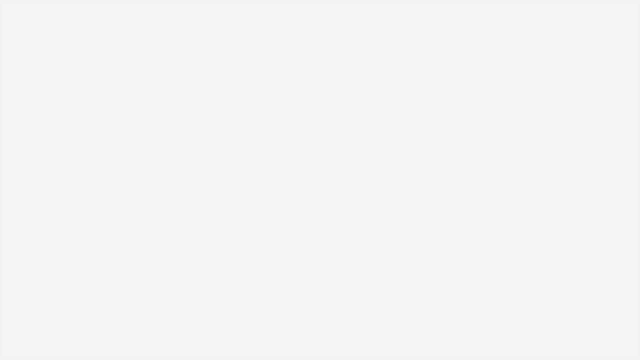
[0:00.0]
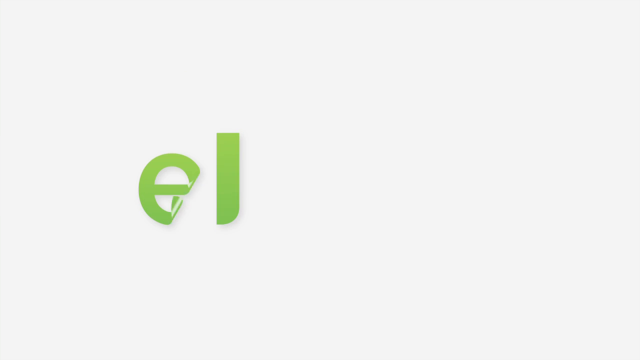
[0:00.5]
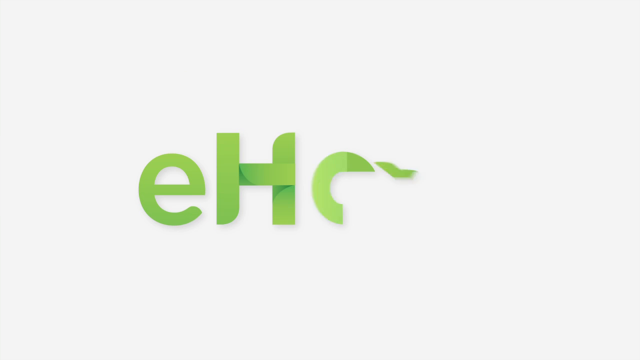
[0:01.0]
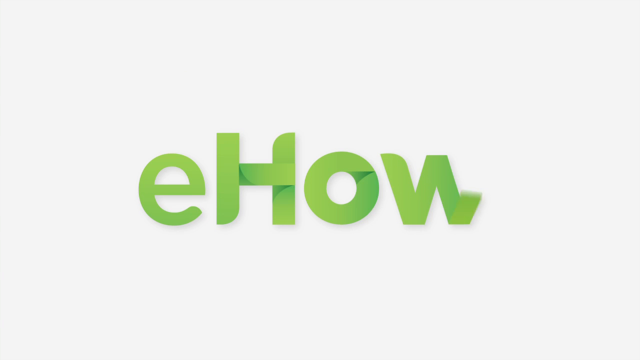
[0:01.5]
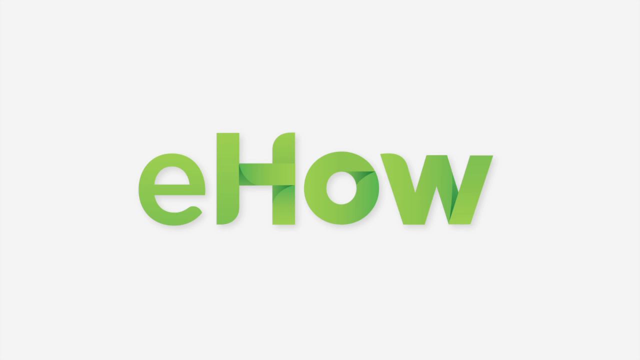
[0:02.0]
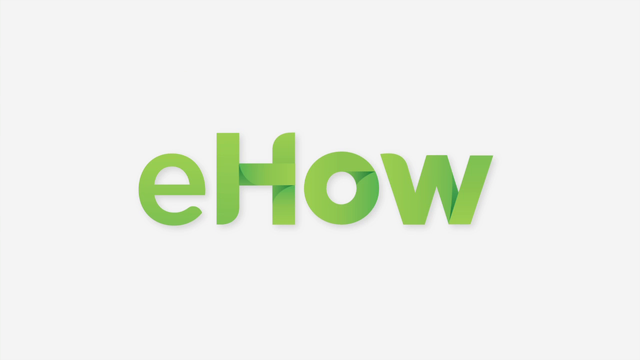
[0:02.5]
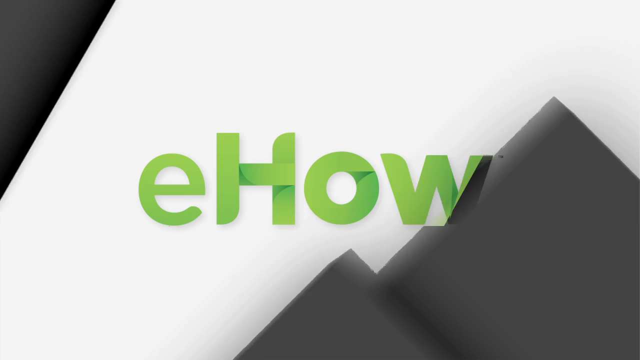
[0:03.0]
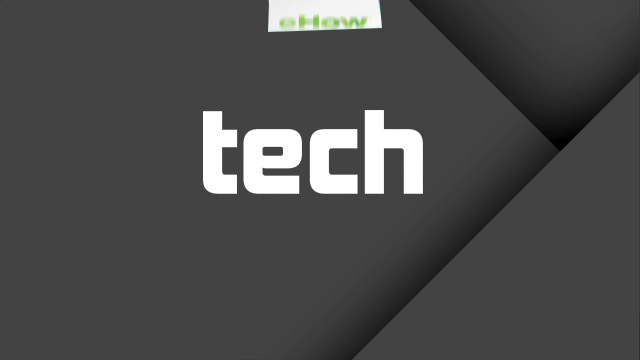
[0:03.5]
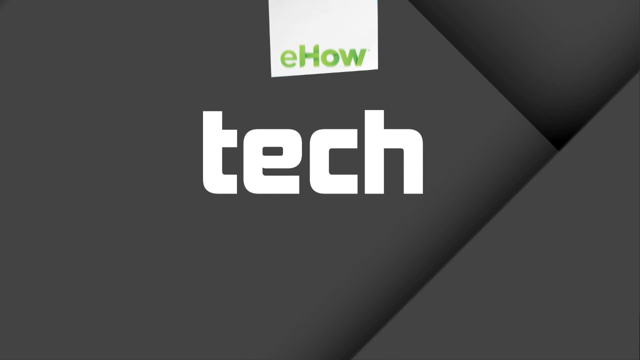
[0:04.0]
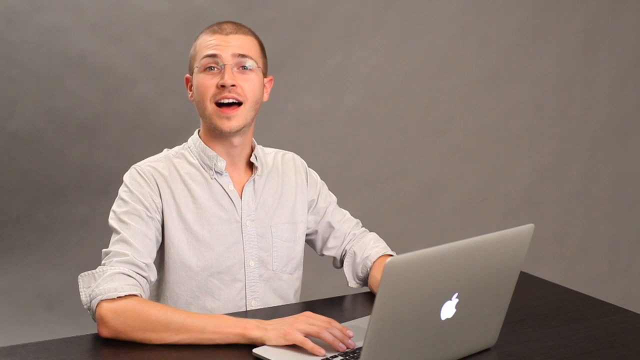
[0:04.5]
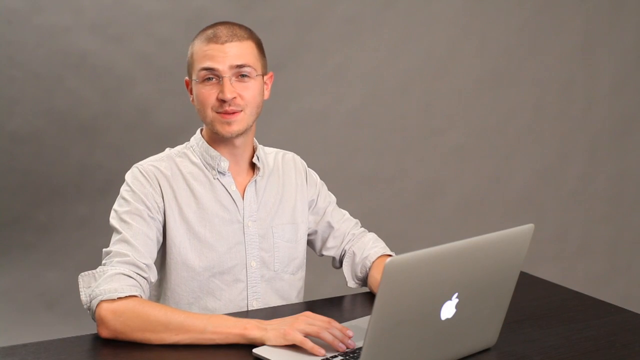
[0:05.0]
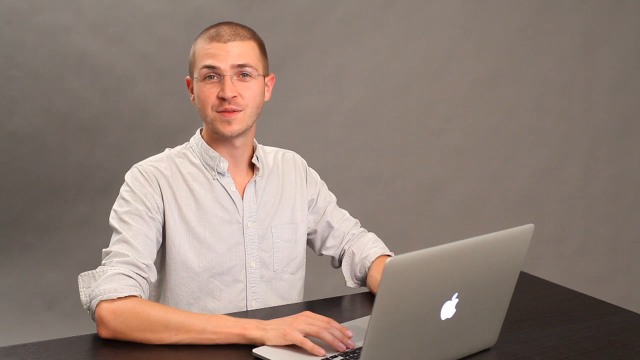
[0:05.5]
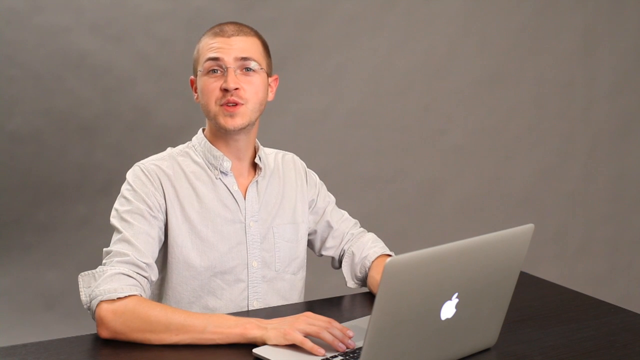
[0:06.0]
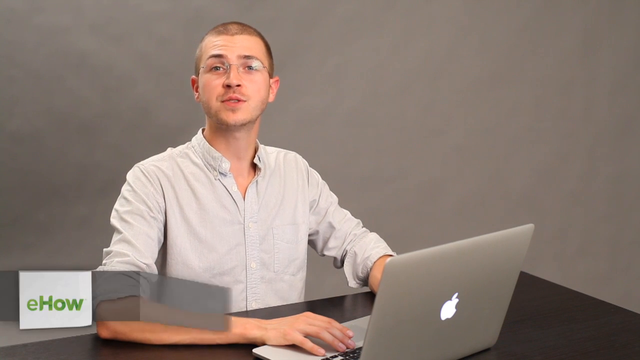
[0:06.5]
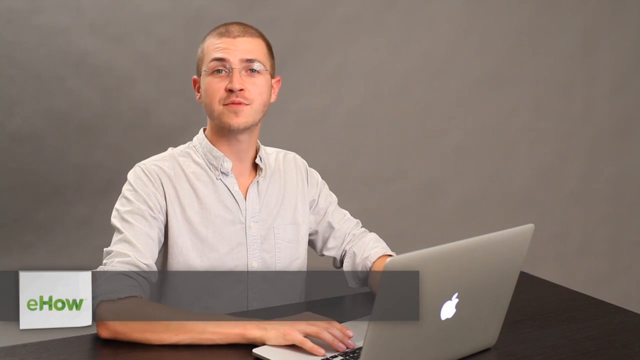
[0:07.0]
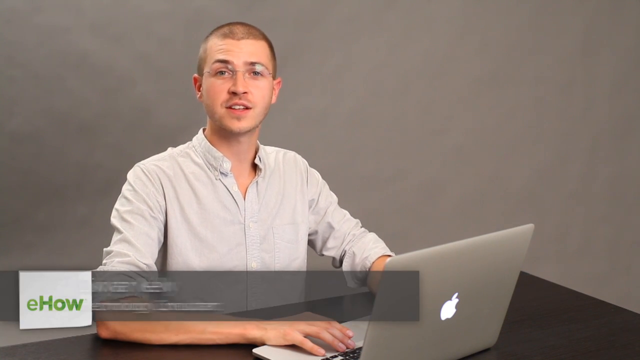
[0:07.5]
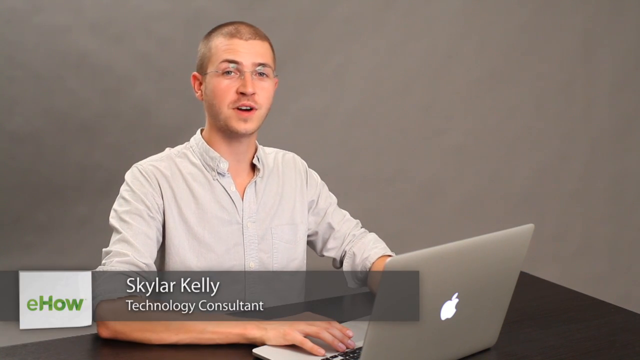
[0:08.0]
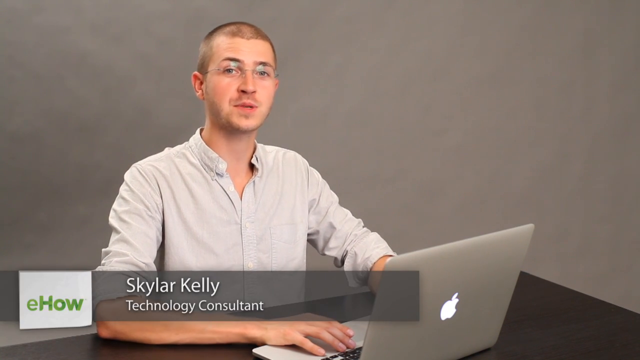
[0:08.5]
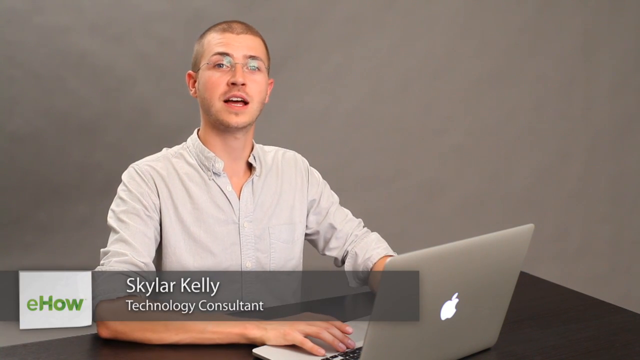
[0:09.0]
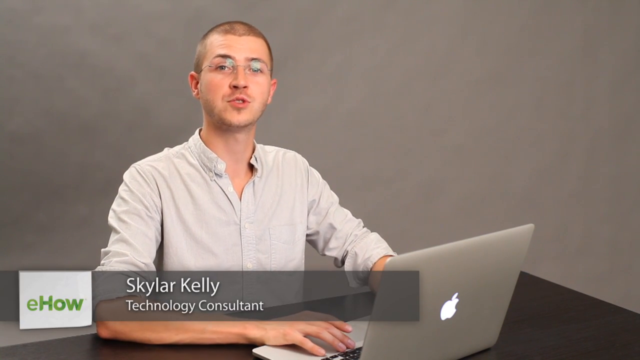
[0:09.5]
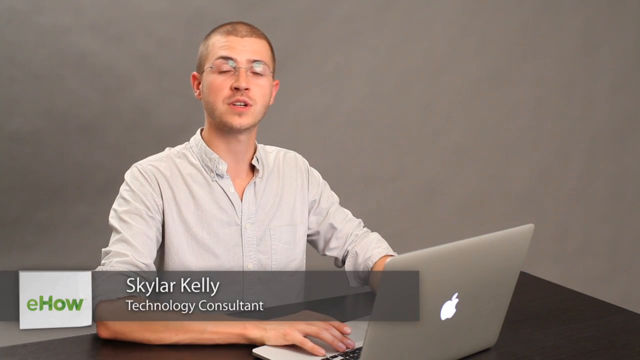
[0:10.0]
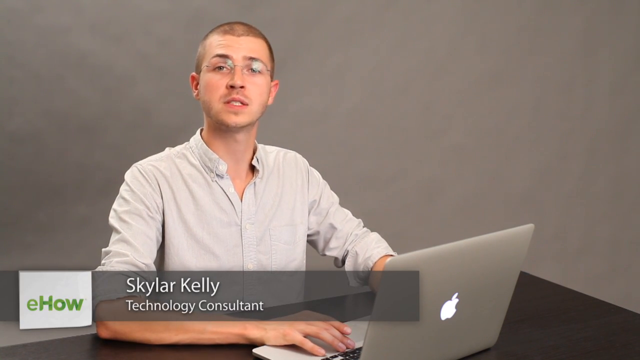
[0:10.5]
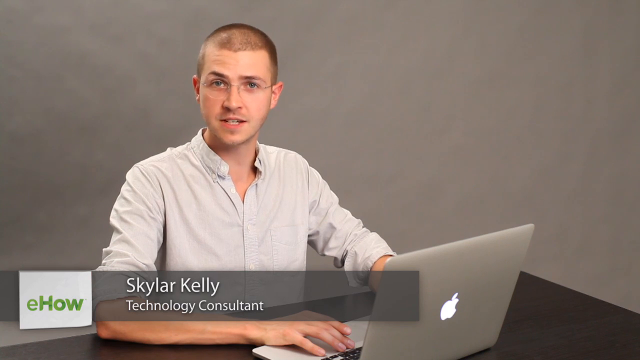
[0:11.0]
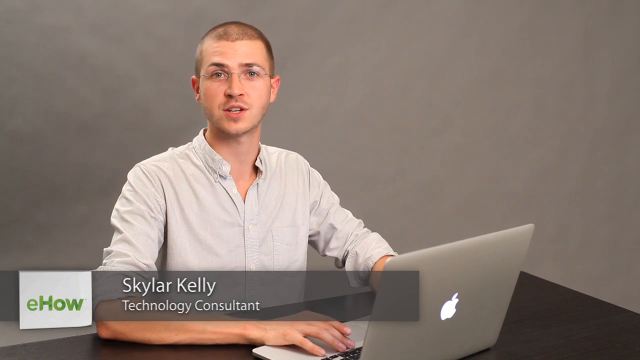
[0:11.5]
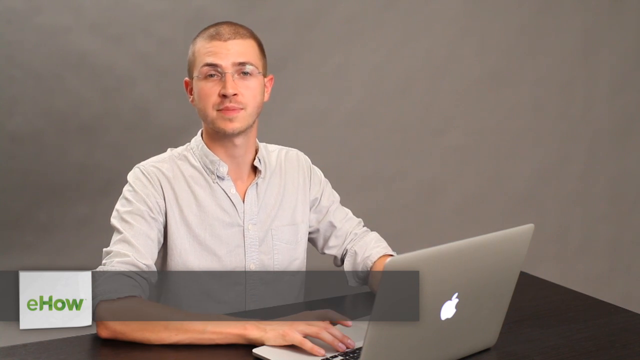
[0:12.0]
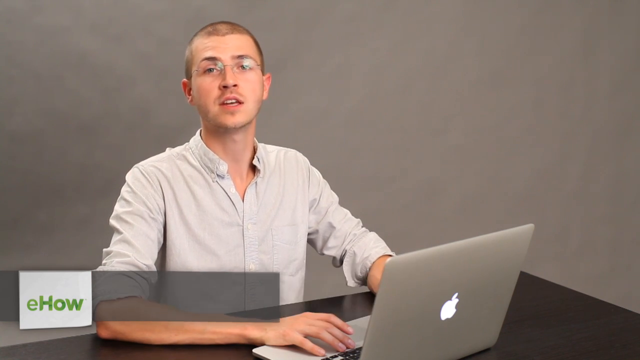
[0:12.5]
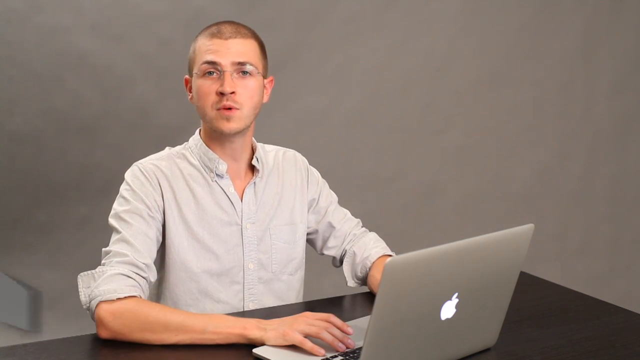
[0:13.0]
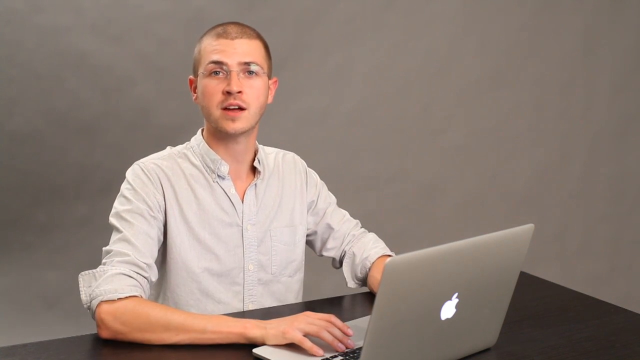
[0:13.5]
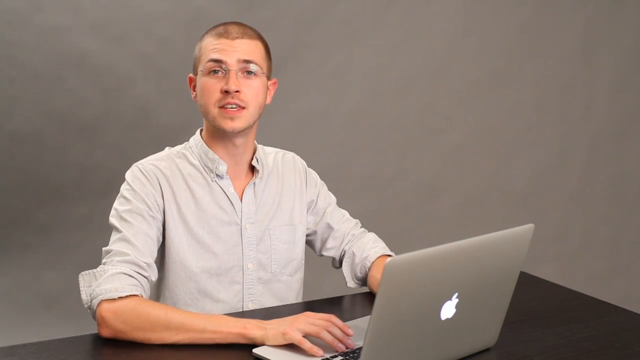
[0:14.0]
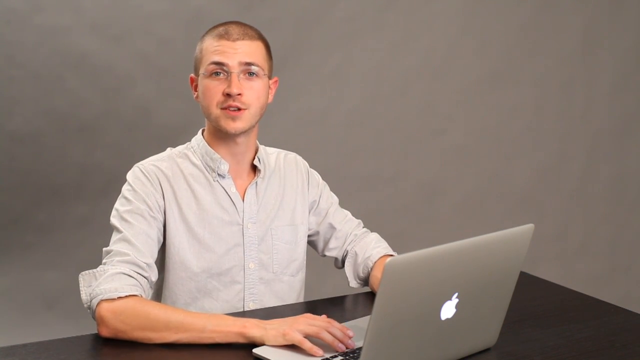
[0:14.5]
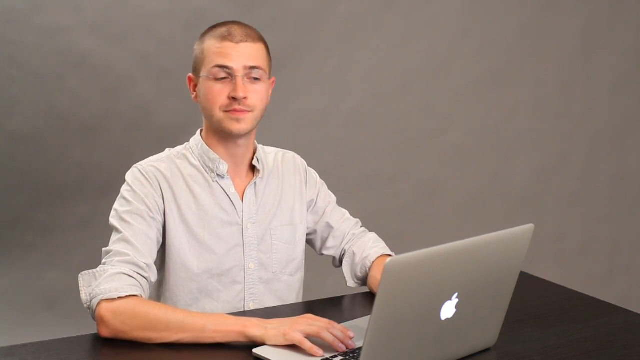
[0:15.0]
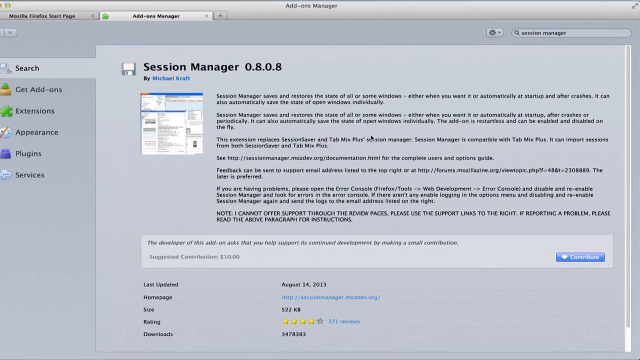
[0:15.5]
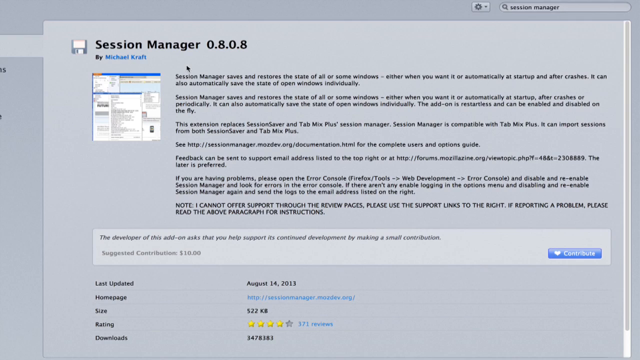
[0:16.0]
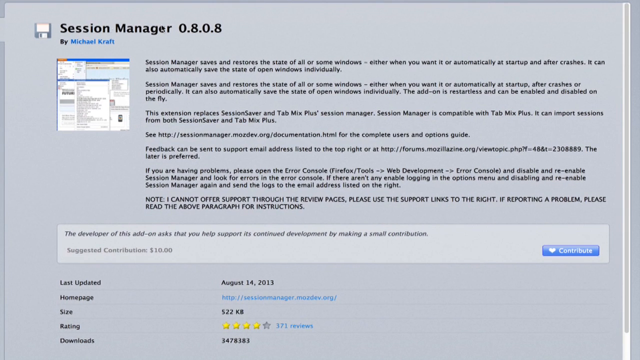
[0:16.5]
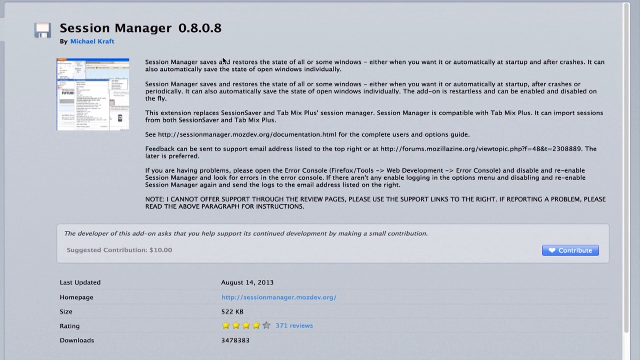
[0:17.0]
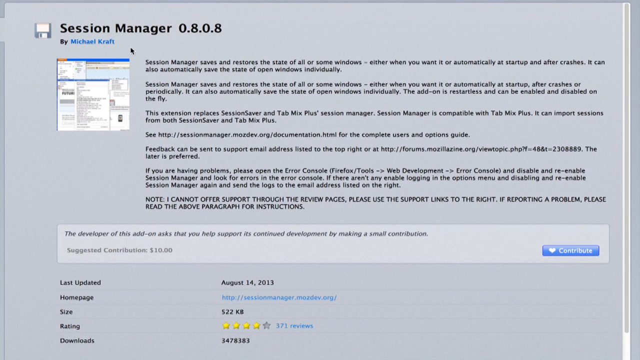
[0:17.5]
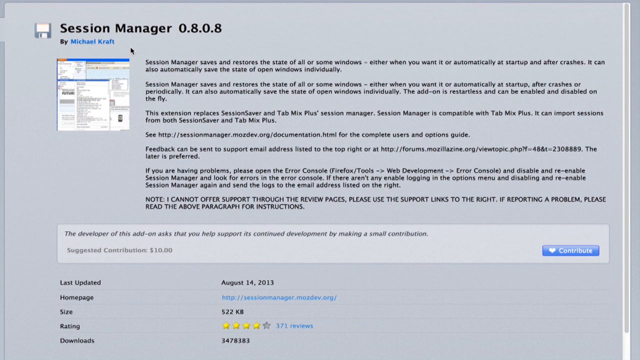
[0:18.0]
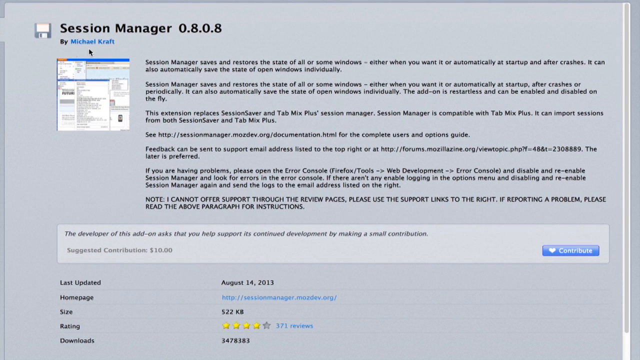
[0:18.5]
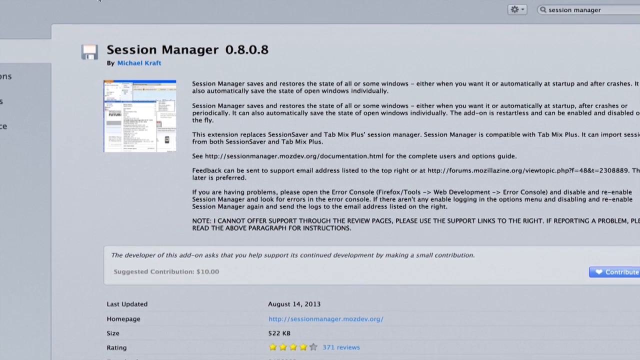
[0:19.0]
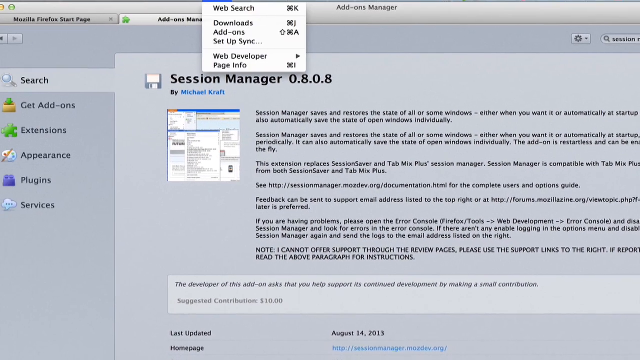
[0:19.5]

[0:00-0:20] The video begins with a white title screen on which an animation prints the letters E-HOW in the middle. Grey panels then cross over to form a background, the word TECH in white is printed in the middle of the screen, and the E-HOW symbol is now at the top middle on top of a white shape. The panels cross over again to reveal the next shot: a man speaks to the camera while sitting in front of a desk with a MacBook on it. He wears glasses, has very short buzz-cut hair, and wears a white long-sleeve button-up shirt scrunched up at the elbows. As he speaks, a banner appears at the bottom left showing the E-HOW logo and, next to it, "Skylar Kelly" with the subtitle "Technology Consultant." He keeps speaking with his hands on the MacBook's keyboard, and eventually looks at his laptop. The next shot is a screen recording of a page, zoomed in to show a session manager, 0.8.0.8, by Michael Croft. The cursor explores the page, and the view then zooms out to reveal the MacBook, showing that the browser is Mozilla Firefox.